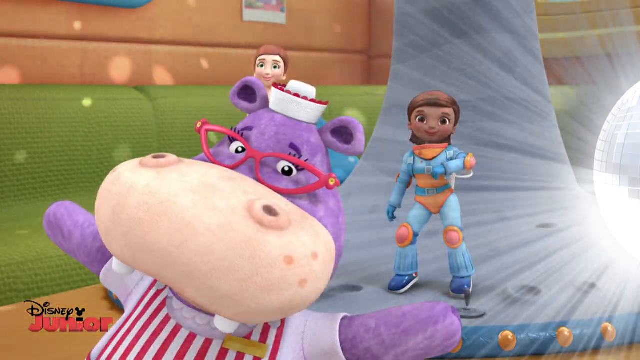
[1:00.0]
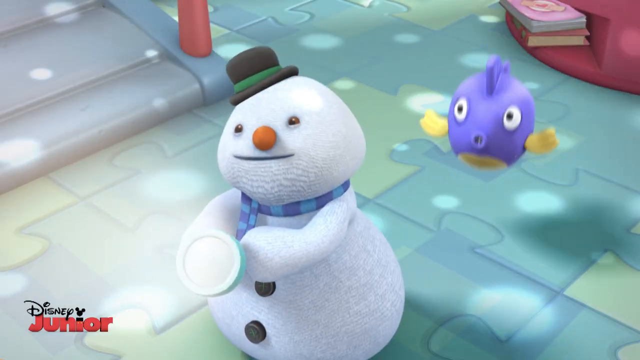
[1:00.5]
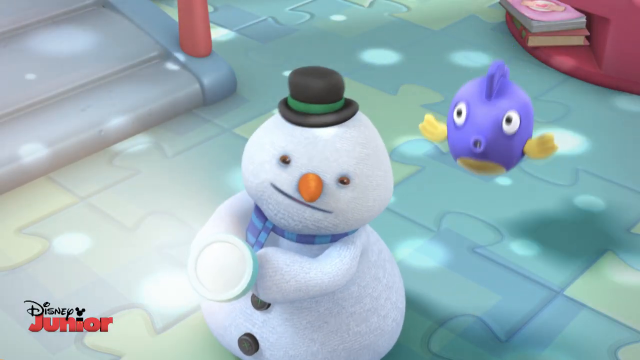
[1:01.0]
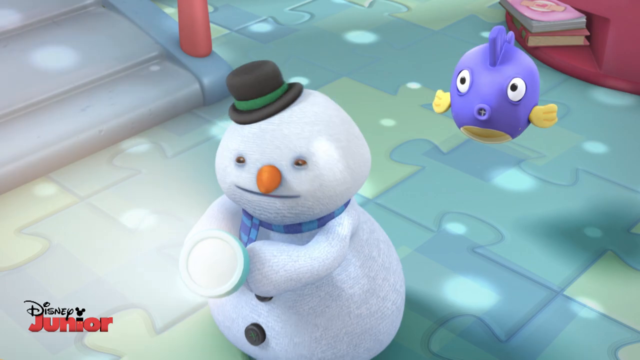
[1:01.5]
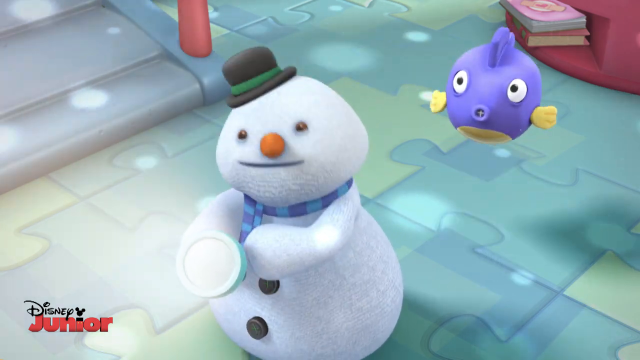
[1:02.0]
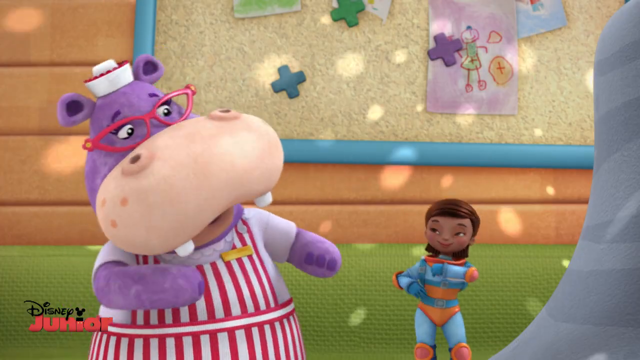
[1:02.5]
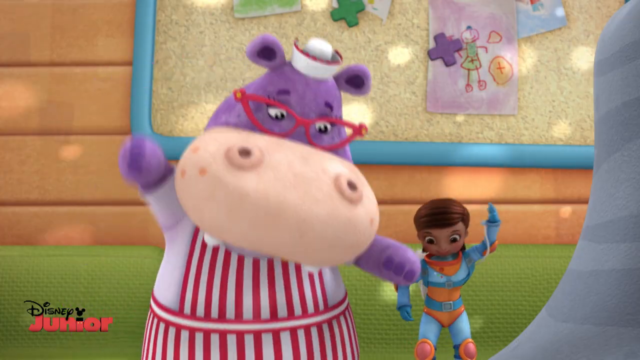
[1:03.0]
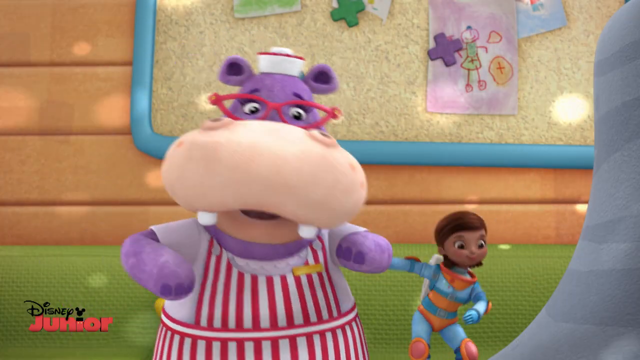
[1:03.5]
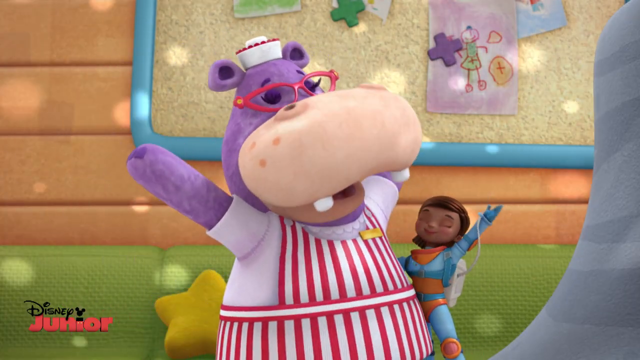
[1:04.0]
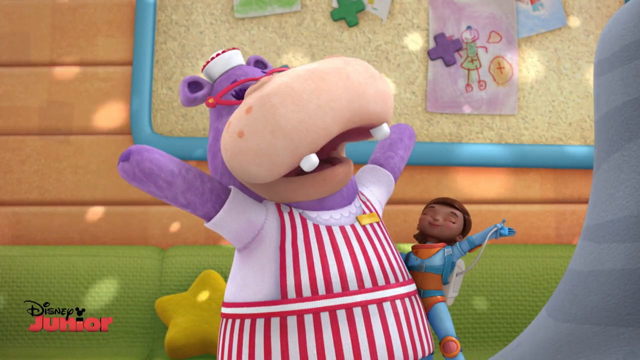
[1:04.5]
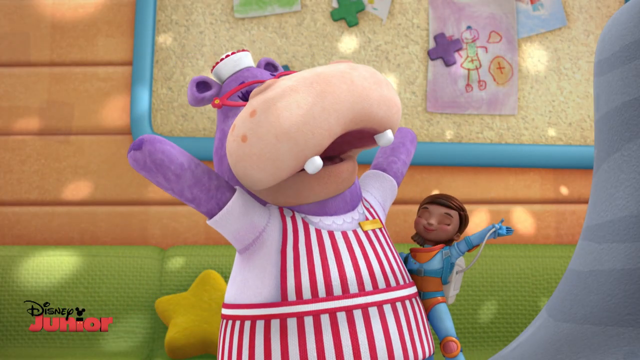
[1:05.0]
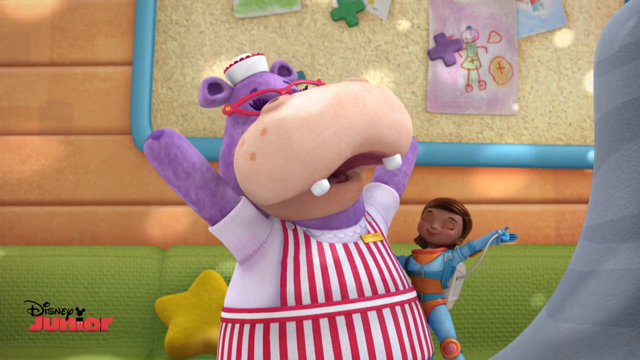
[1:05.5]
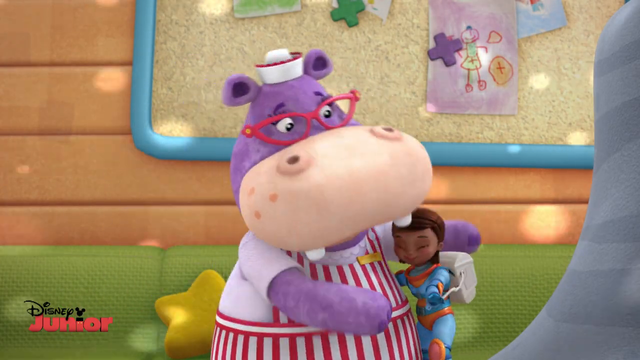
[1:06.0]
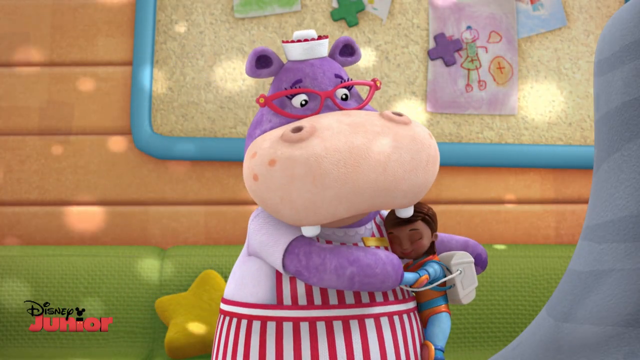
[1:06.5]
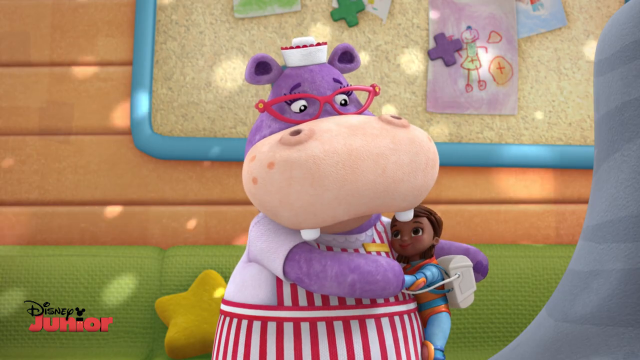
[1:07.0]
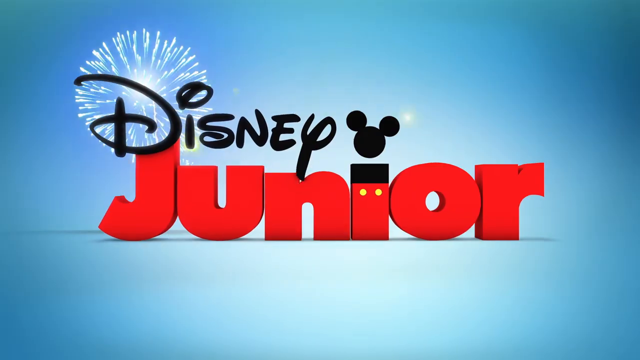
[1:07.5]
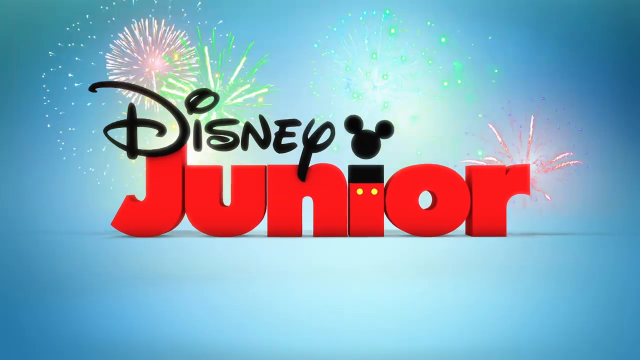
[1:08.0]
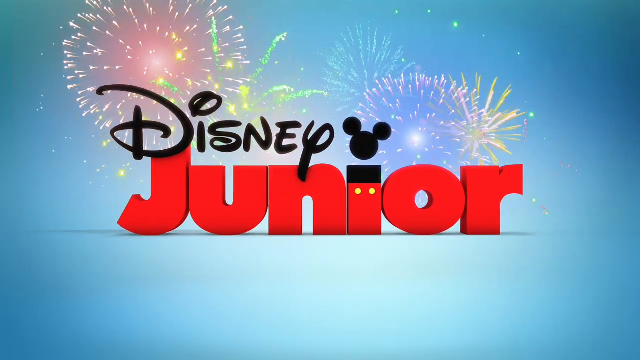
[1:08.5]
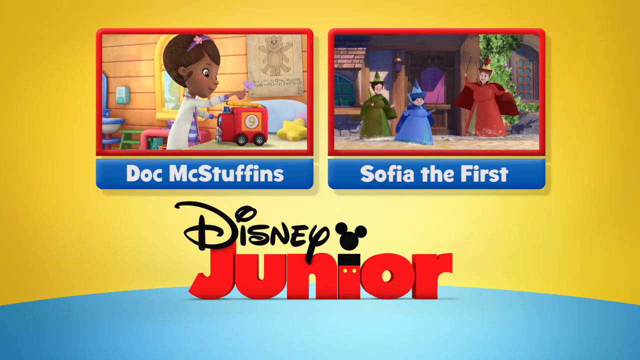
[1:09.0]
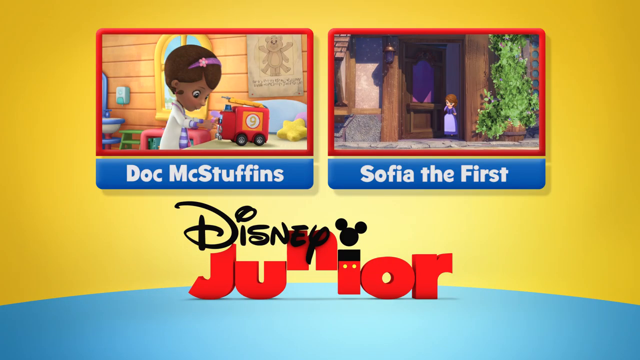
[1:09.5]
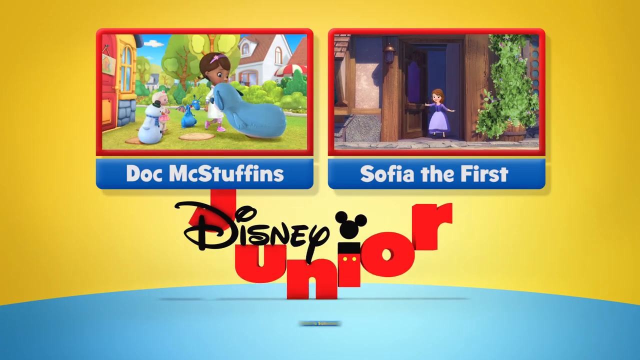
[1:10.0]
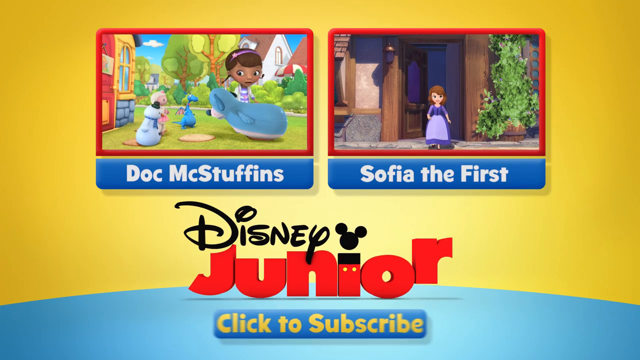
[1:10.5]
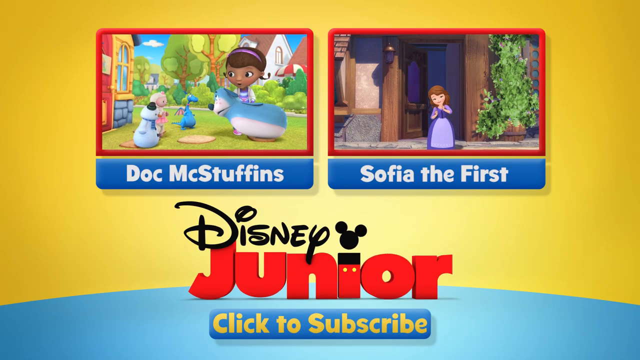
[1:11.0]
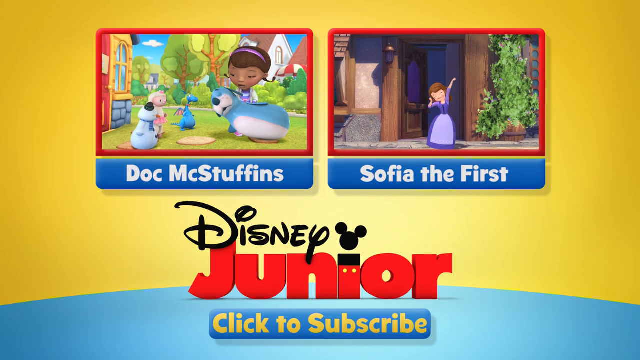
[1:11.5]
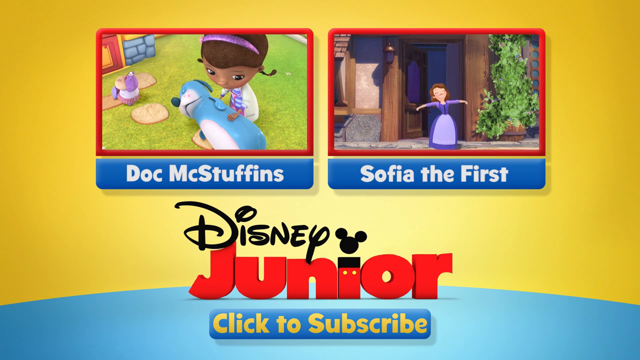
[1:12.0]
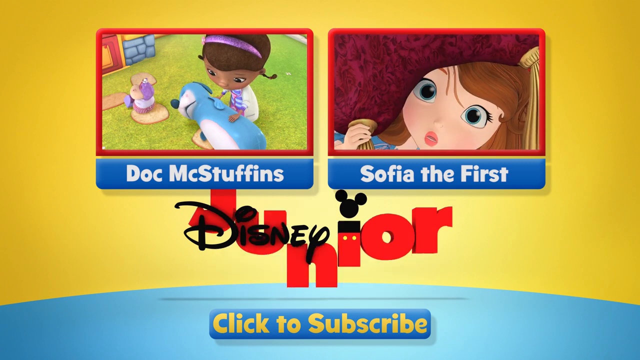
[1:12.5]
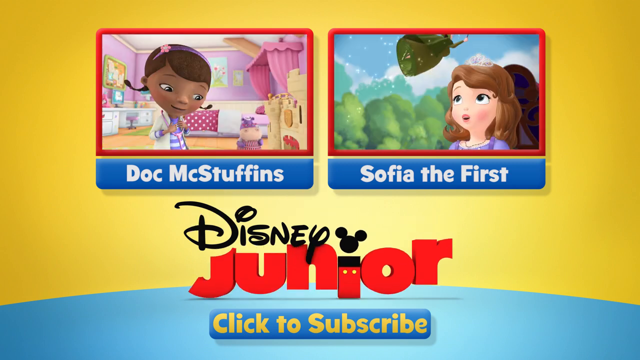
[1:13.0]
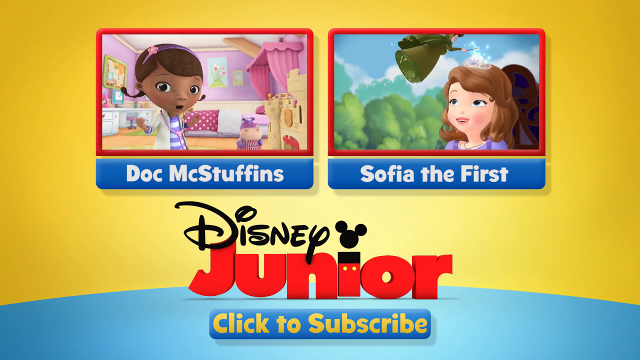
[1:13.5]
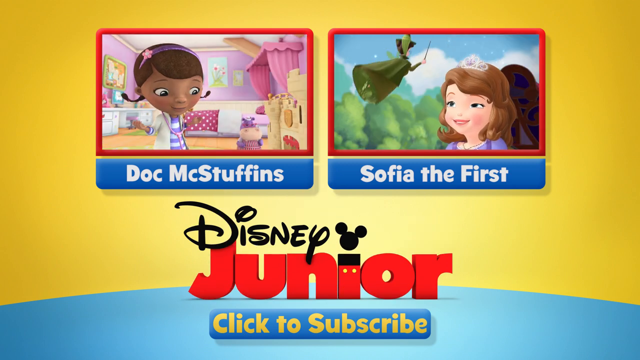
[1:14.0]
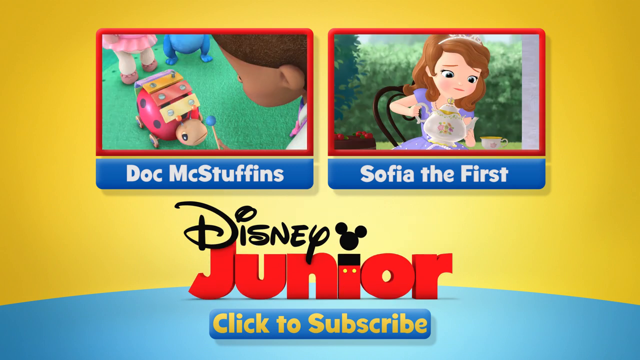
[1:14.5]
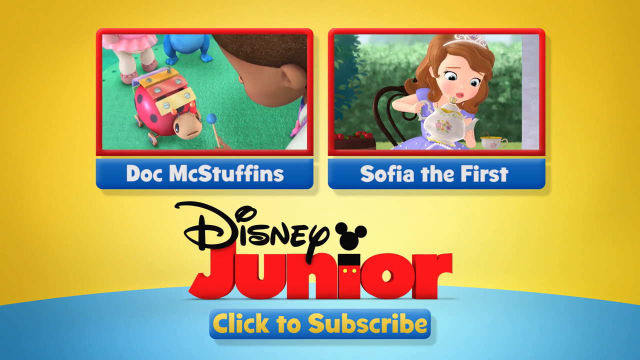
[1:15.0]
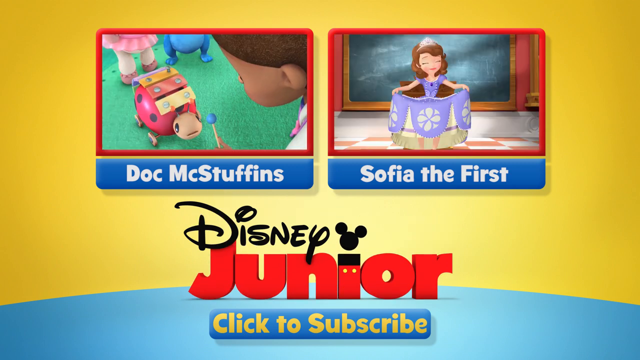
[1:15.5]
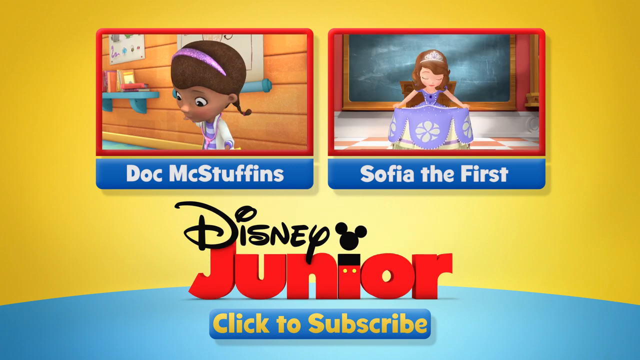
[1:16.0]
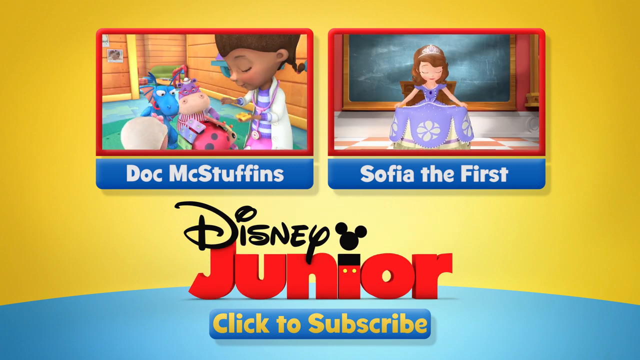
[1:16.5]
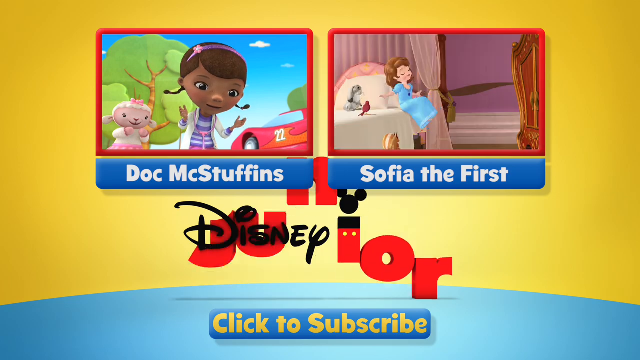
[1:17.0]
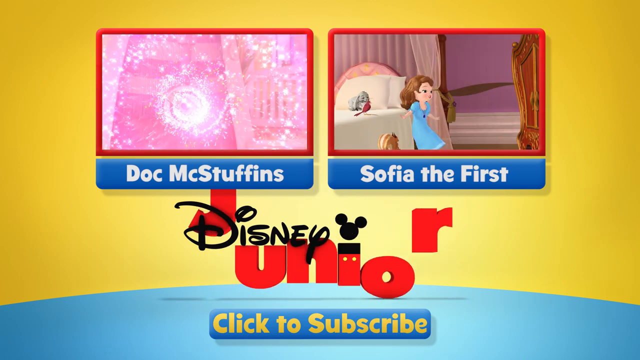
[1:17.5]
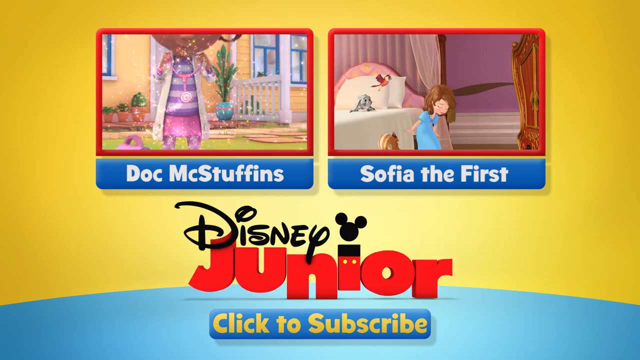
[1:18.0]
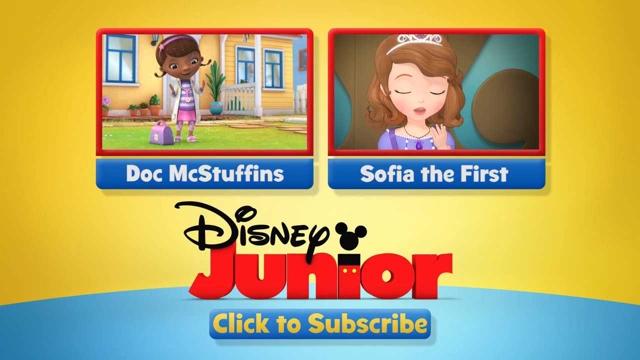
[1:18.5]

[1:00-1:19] The snowman holds the flashlight and aims it toward the disco ball, creating the disco effect, while a fish jumps up and down and around next to the snowman. After dancing along with the astronaut, the hippopotamus hugs her and cheers her up. The video then ends with an end screen offering options to watch more videos: one is titled "Doc McStuffins" and the other "Sophia the First".